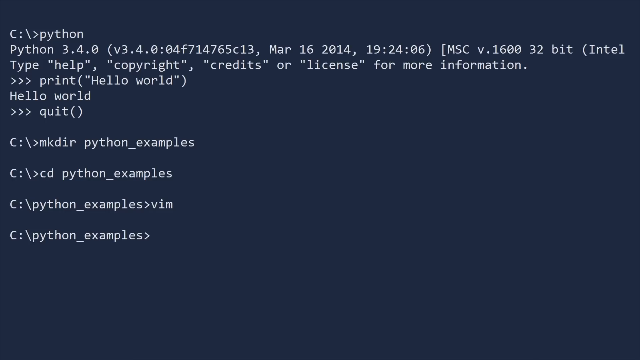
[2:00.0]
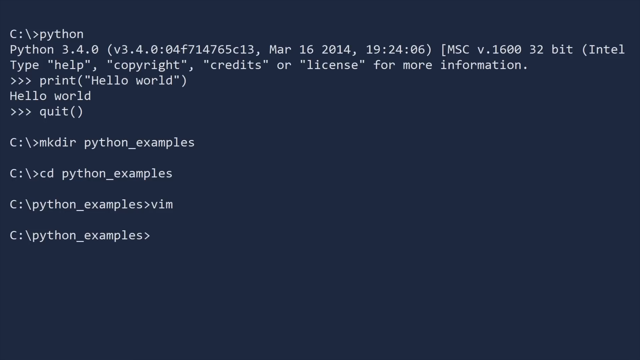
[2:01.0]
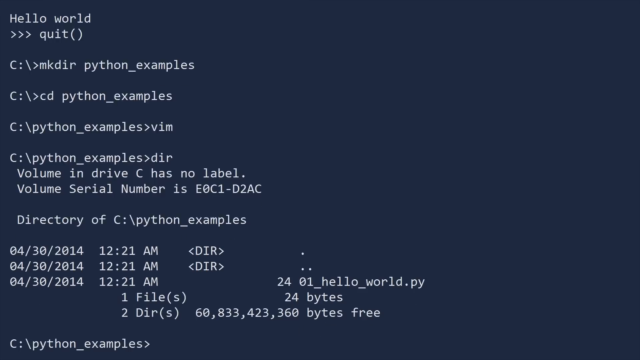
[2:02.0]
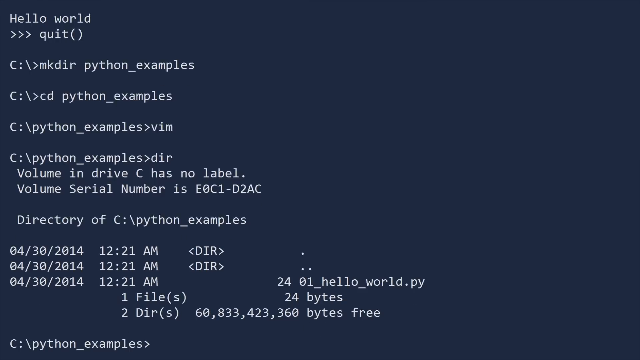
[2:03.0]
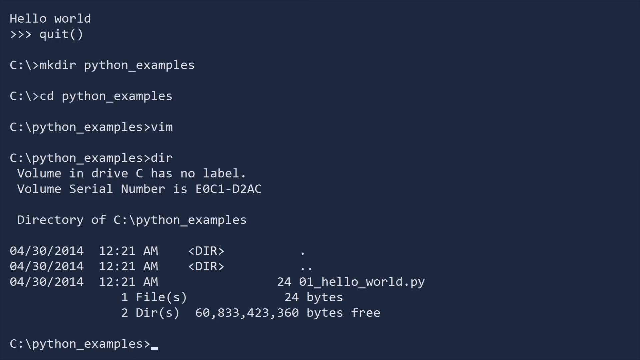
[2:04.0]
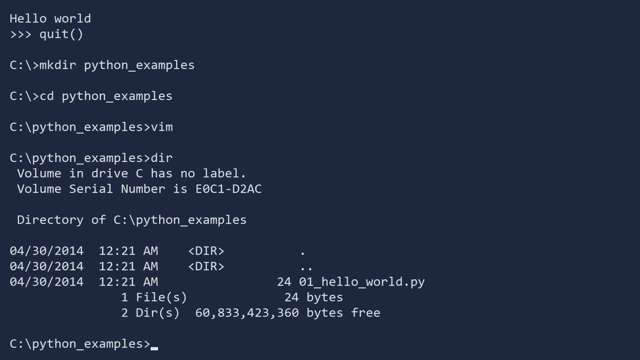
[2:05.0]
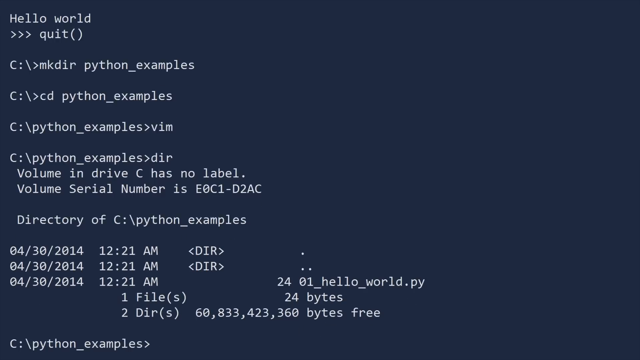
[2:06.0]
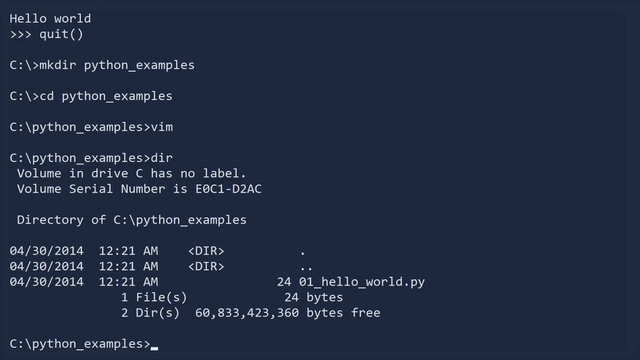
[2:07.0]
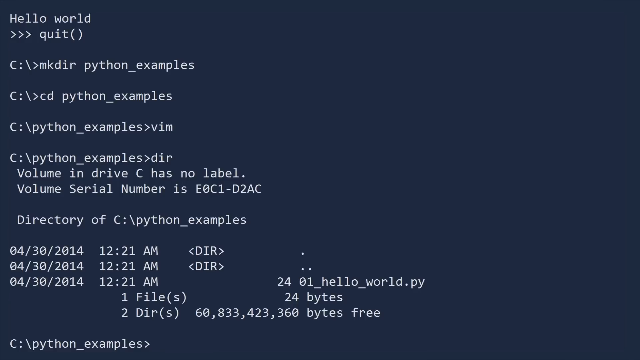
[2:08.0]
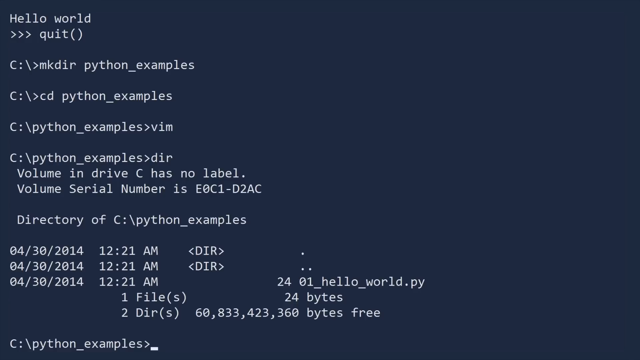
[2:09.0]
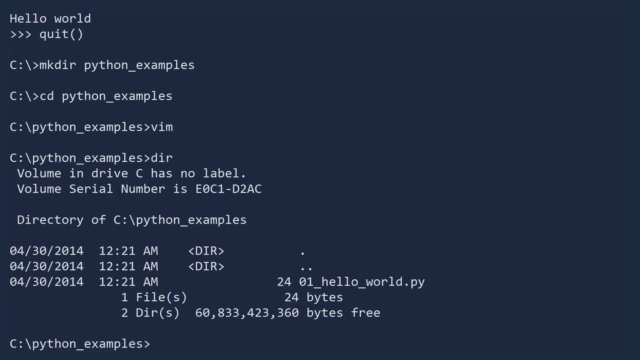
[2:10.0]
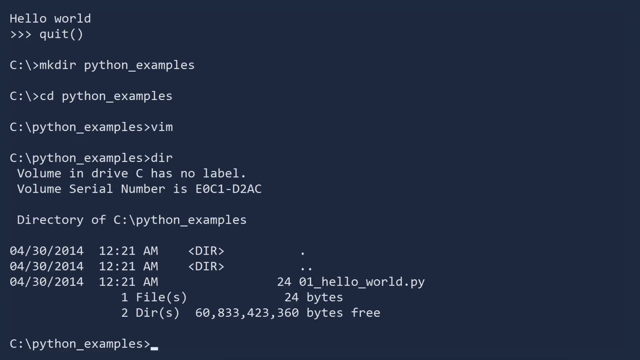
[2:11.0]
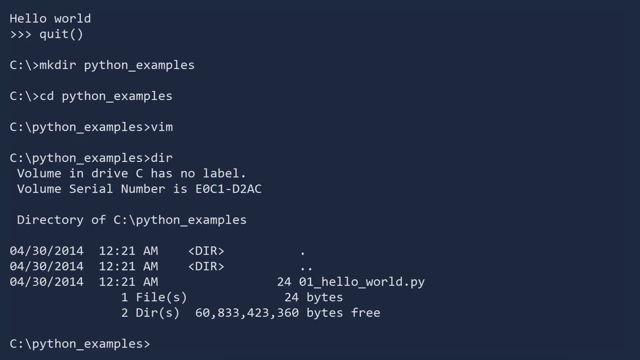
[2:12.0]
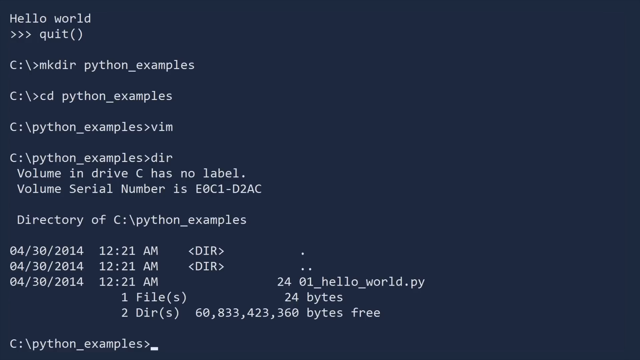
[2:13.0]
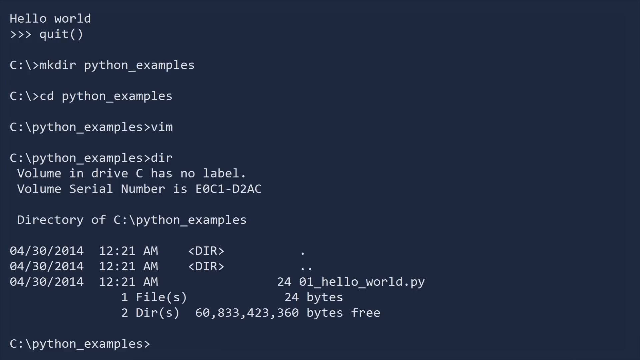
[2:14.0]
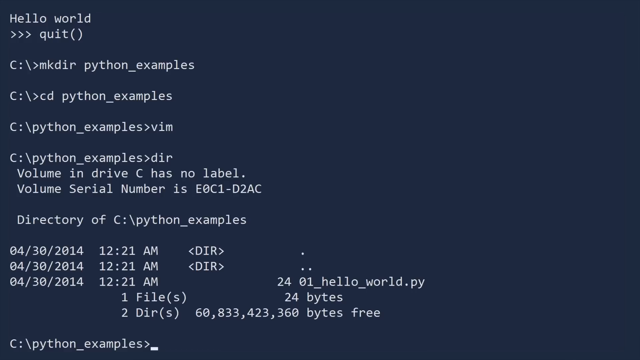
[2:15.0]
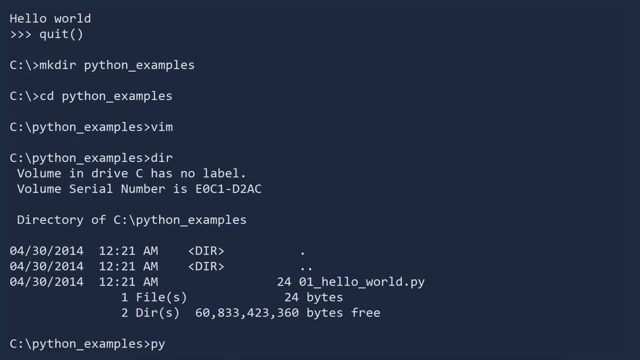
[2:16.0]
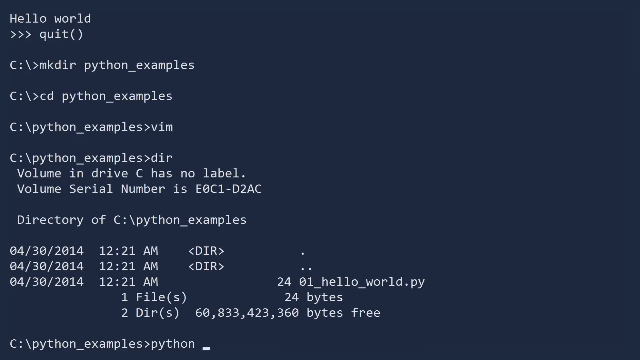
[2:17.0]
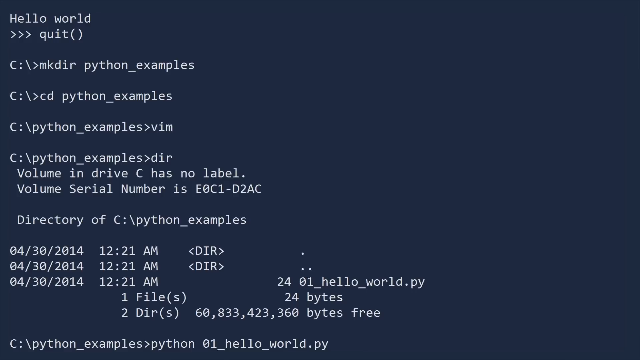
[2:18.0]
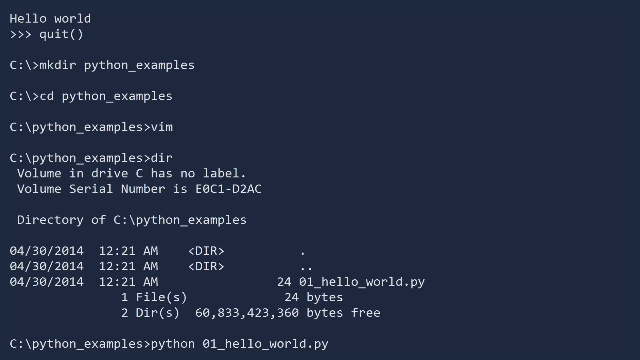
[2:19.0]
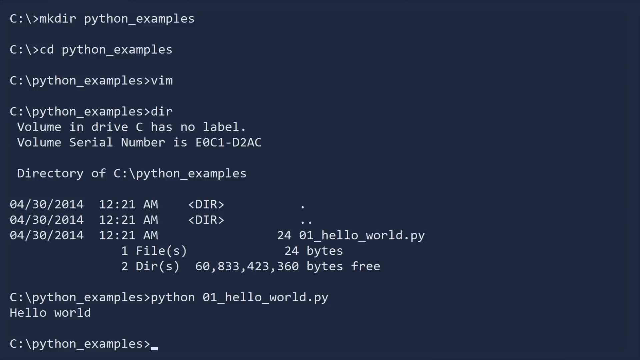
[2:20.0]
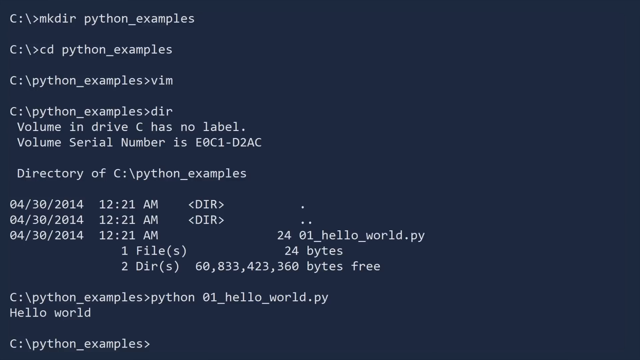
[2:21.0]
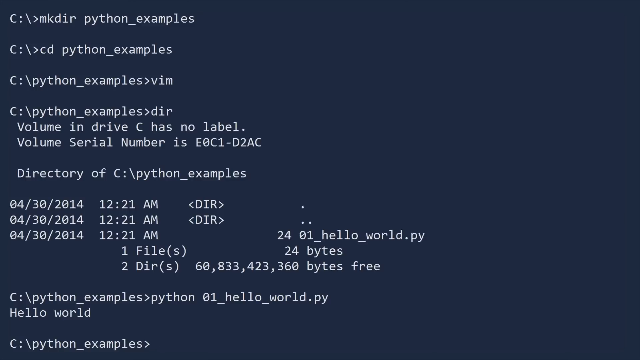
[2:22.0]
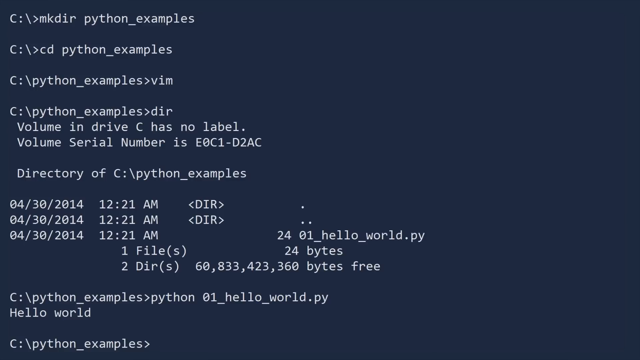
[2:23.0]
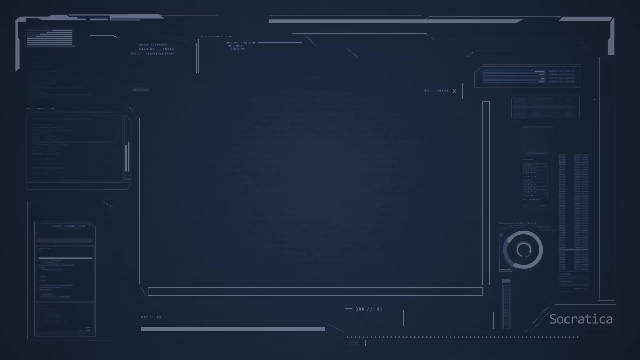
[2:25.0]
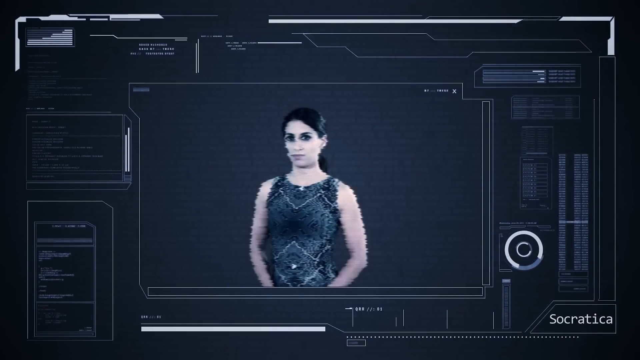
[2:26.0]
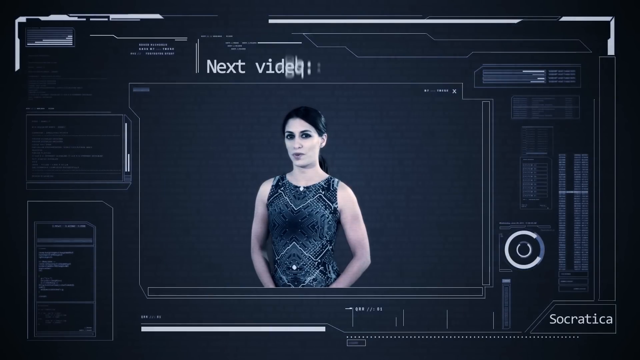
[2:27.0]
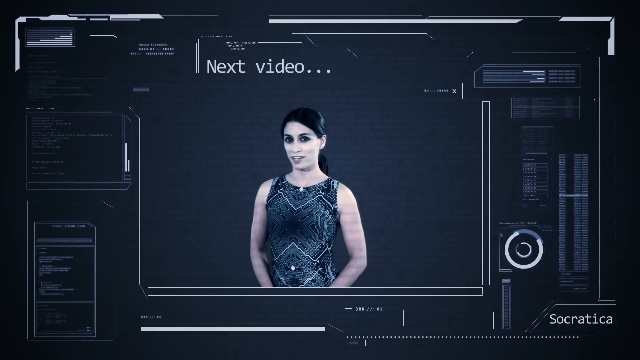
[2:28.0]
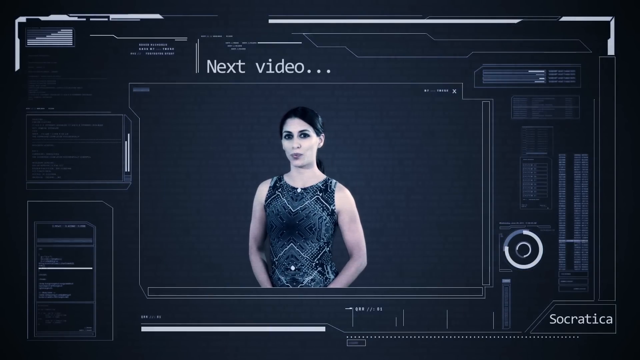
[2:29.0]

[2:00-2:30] The command terminal, with its dark blue background, lists various commands: "python", which displays Python information for the current system; print hello world, with "hello world" below it; "quit()"; "mkdir python_examples"; and "cd python_examples", which takes him to the python examples directory. He types "vim" and then "dir". After the dir command, system information appears, saying the volume in drive c has no label, the volume serial number is "e0c1-d2ac", and below that "directory of c:\python examples", along with all the directories. He then types "python01__hello__world.py", and the terminal prints "hello world". The screen transitions to an empty dark blue screen and then back to the technological interface with the woman in the center, as shown at the beginning of the video.